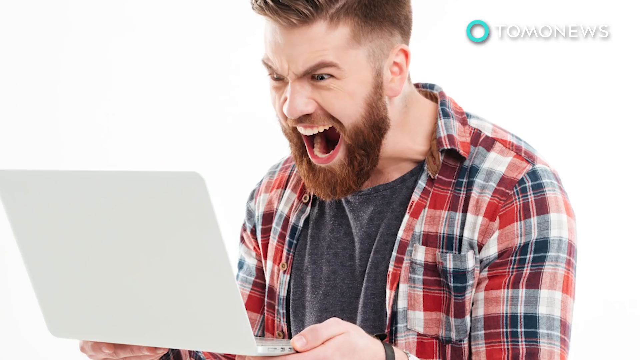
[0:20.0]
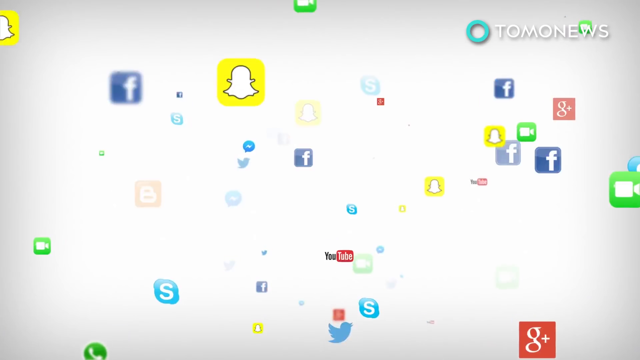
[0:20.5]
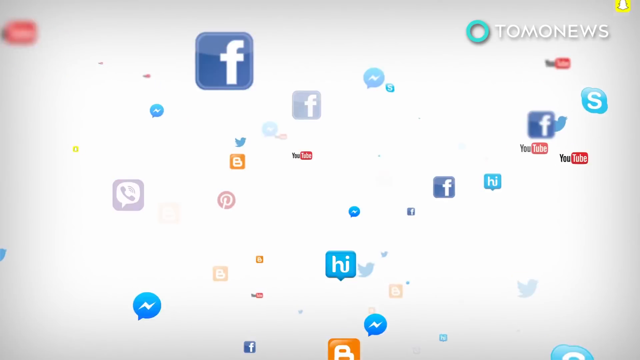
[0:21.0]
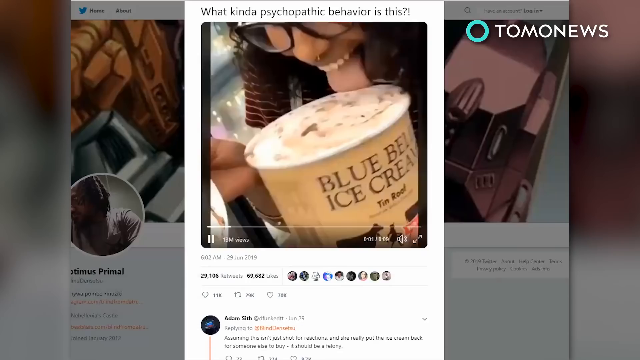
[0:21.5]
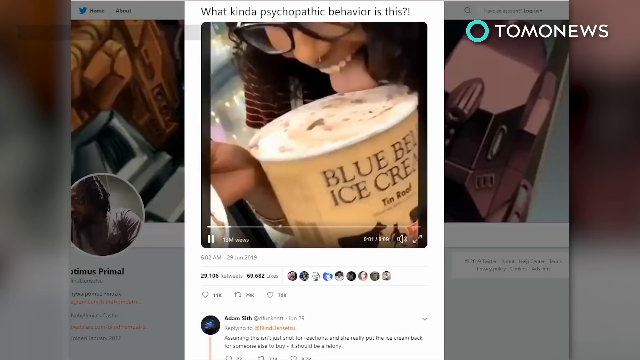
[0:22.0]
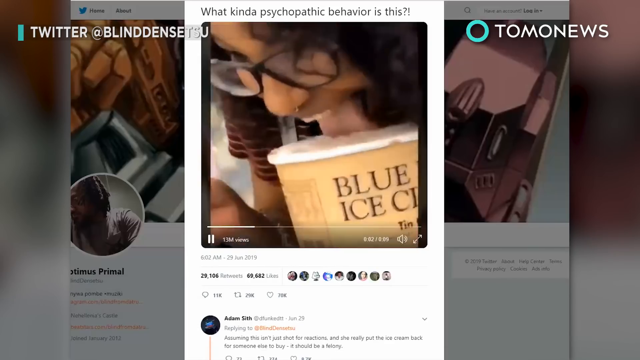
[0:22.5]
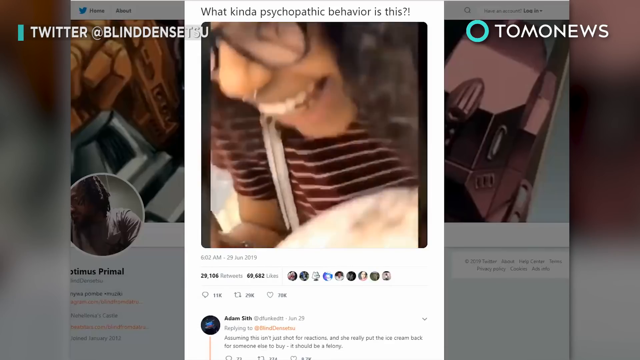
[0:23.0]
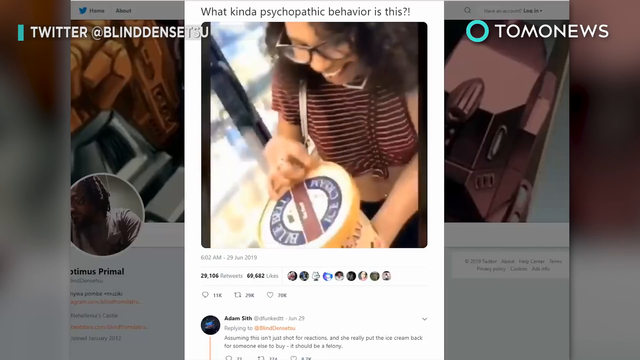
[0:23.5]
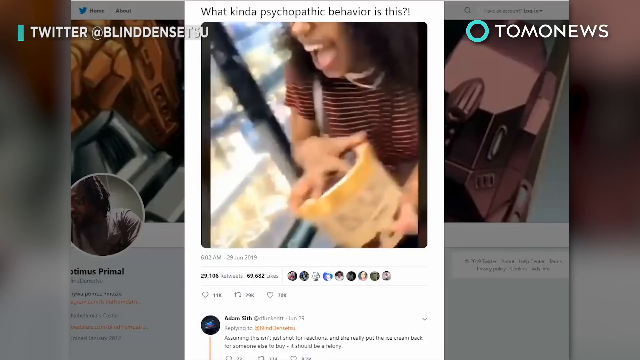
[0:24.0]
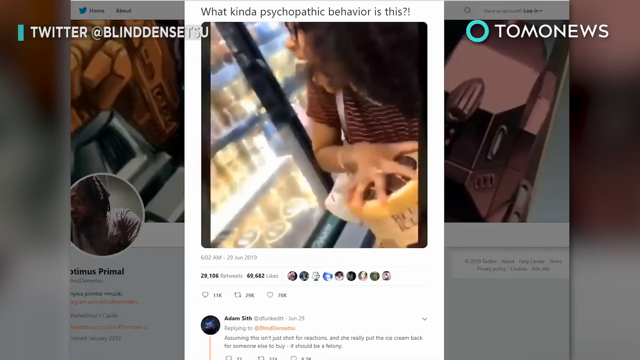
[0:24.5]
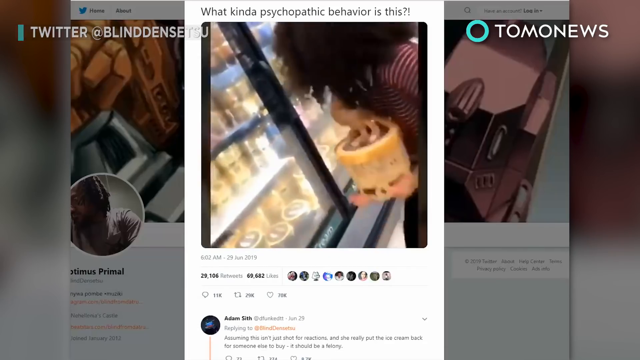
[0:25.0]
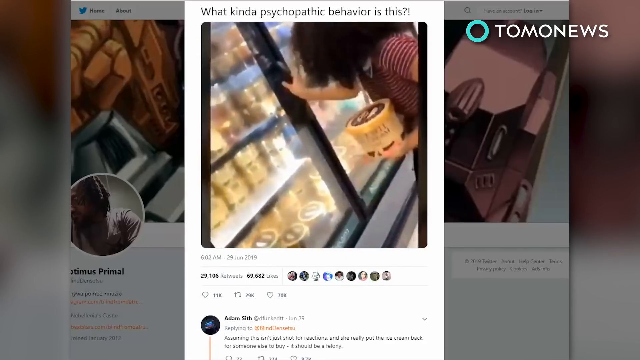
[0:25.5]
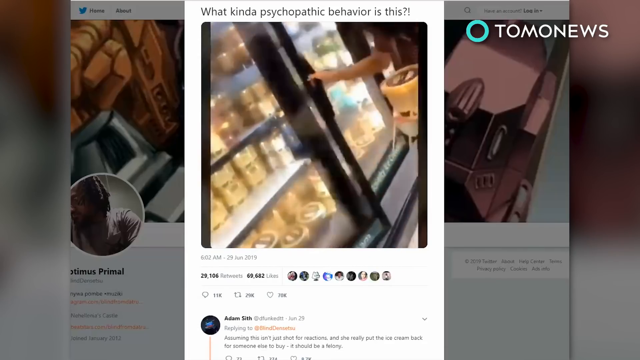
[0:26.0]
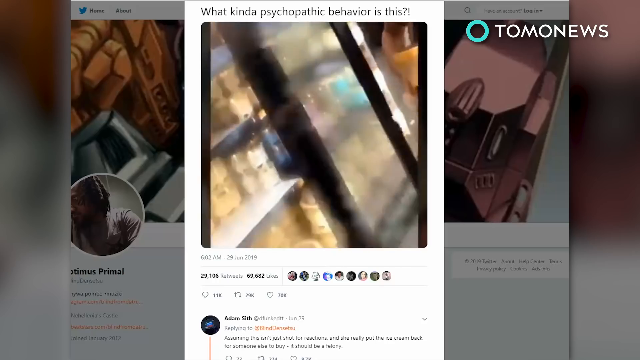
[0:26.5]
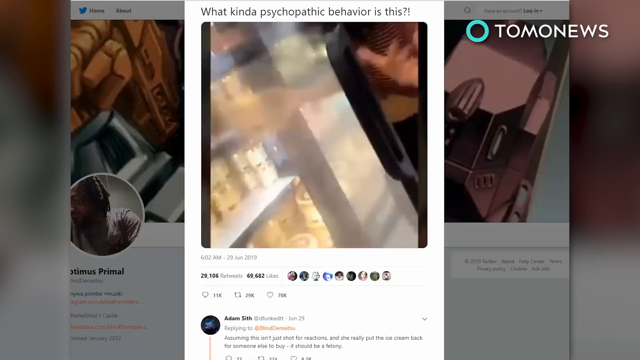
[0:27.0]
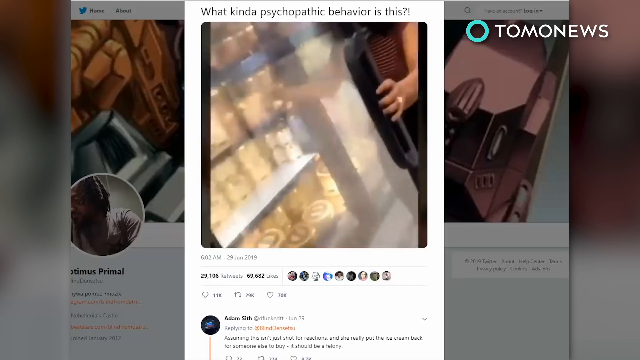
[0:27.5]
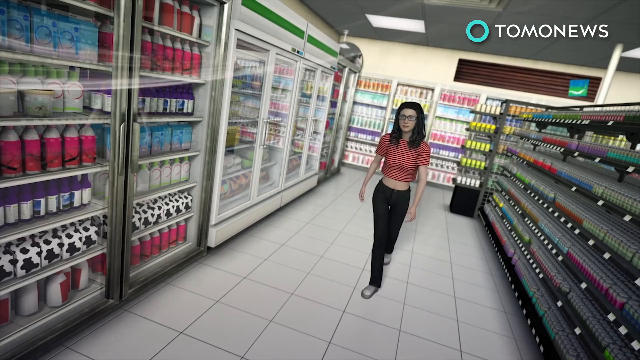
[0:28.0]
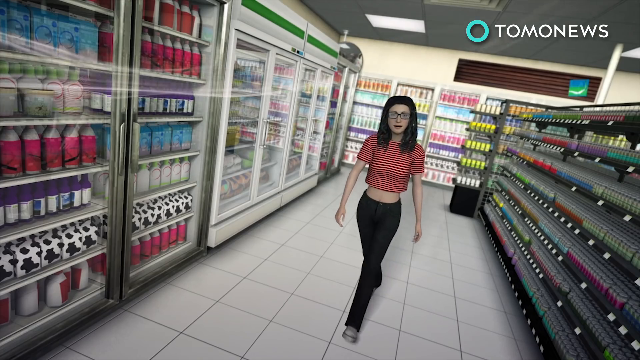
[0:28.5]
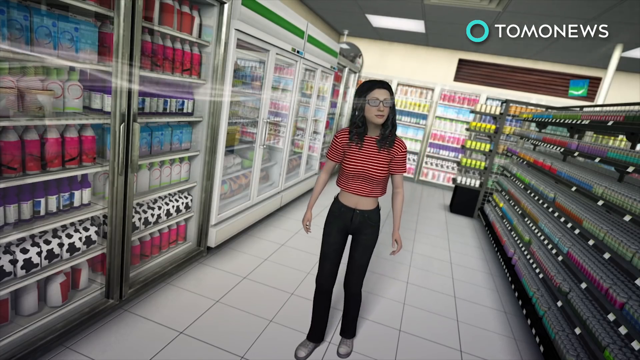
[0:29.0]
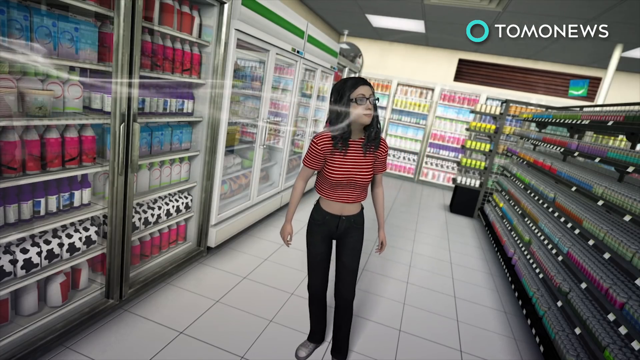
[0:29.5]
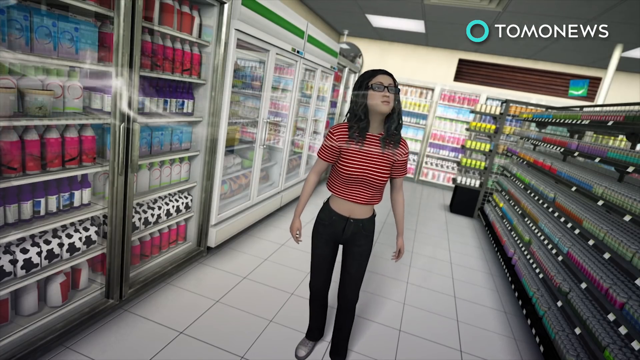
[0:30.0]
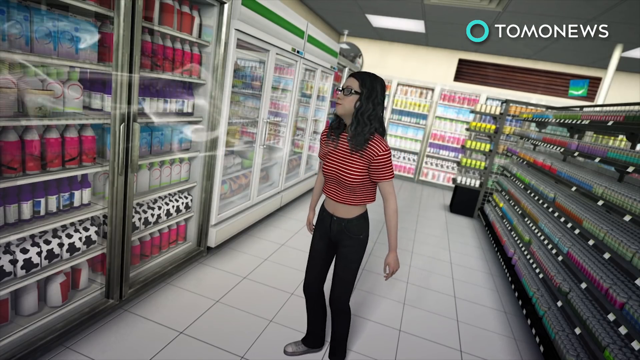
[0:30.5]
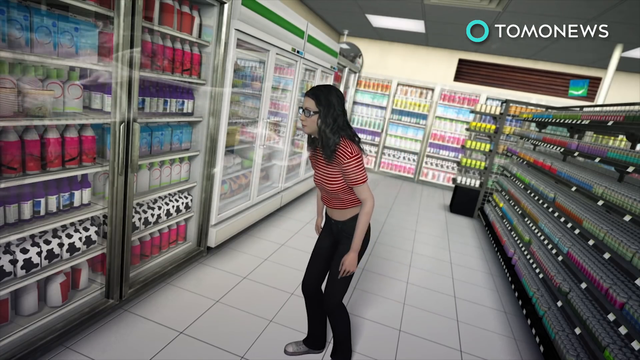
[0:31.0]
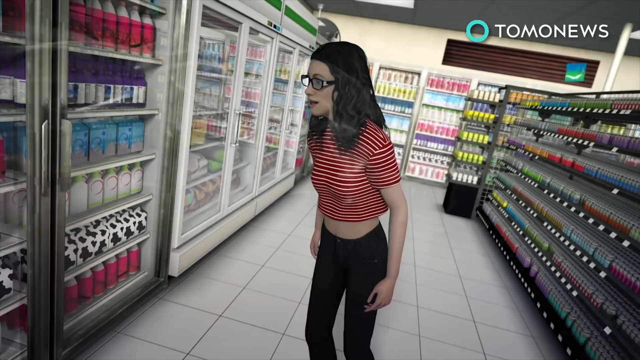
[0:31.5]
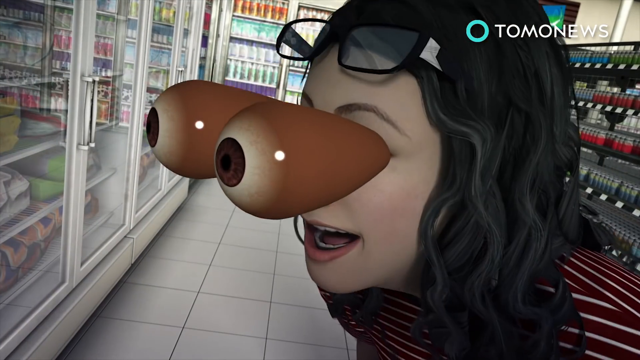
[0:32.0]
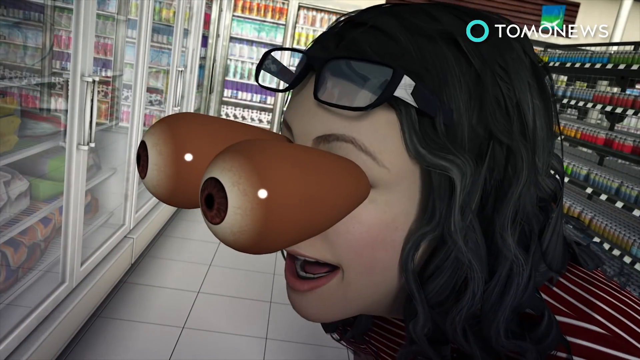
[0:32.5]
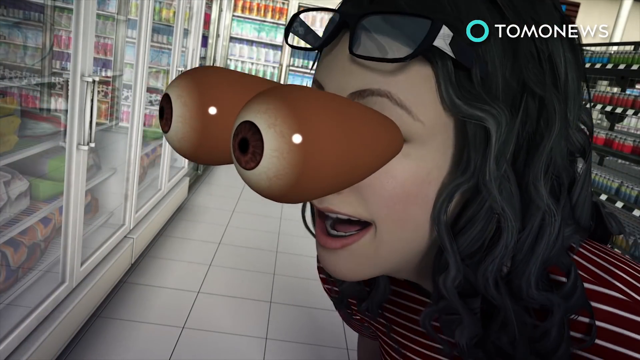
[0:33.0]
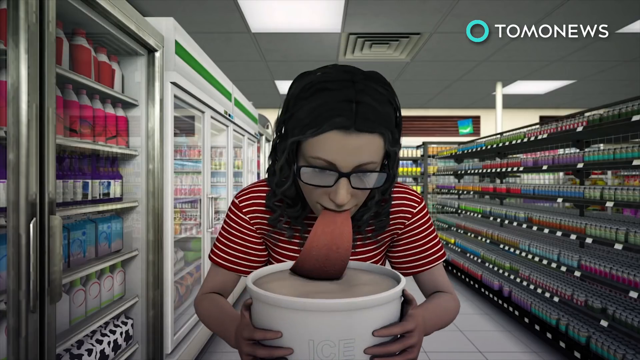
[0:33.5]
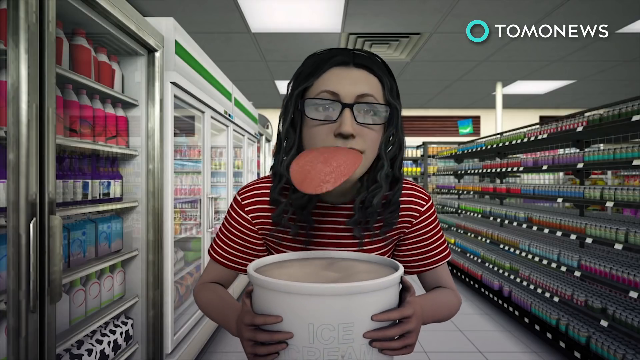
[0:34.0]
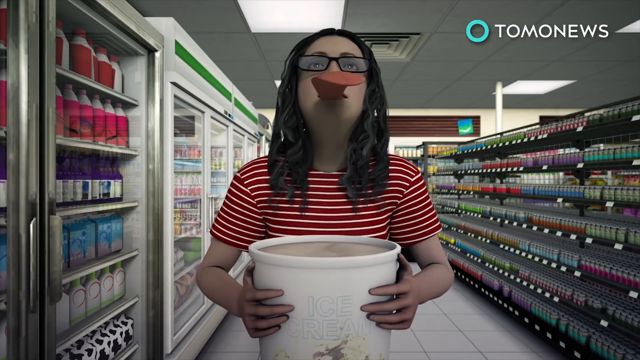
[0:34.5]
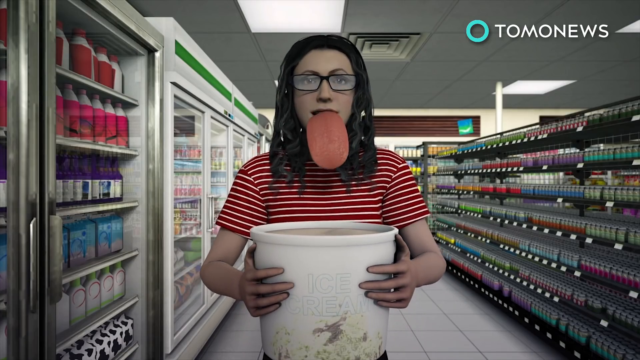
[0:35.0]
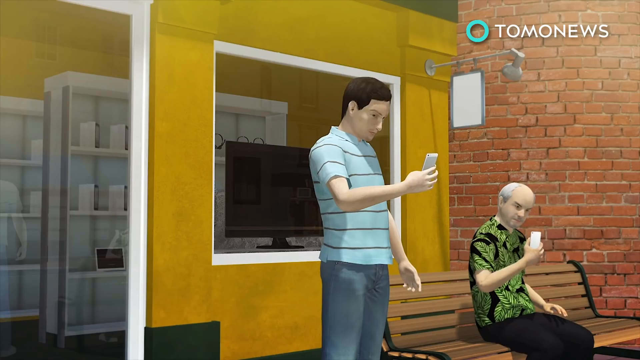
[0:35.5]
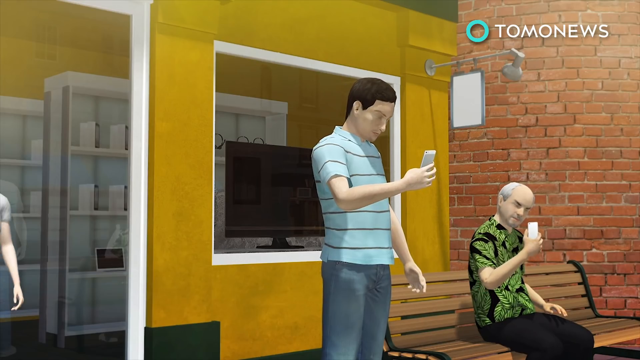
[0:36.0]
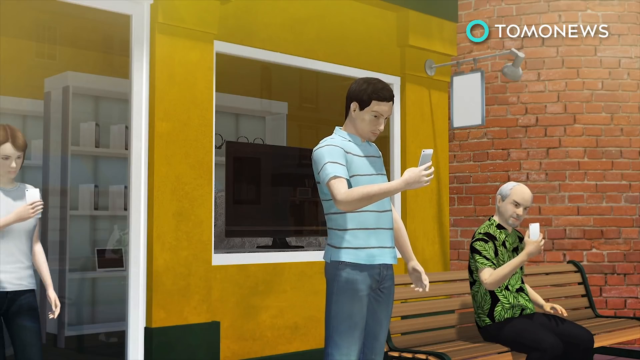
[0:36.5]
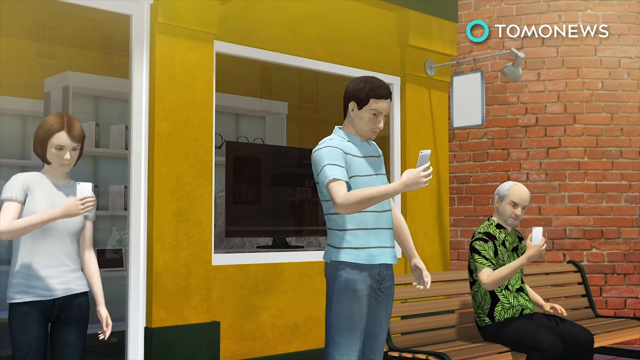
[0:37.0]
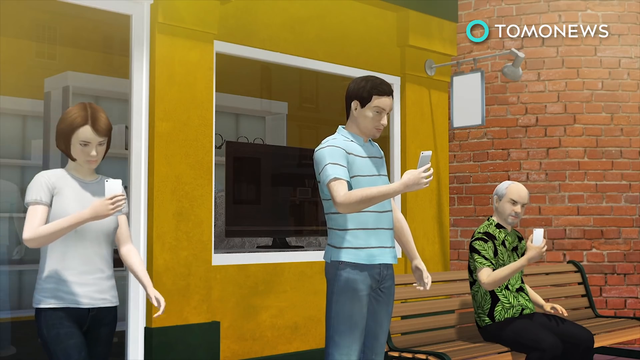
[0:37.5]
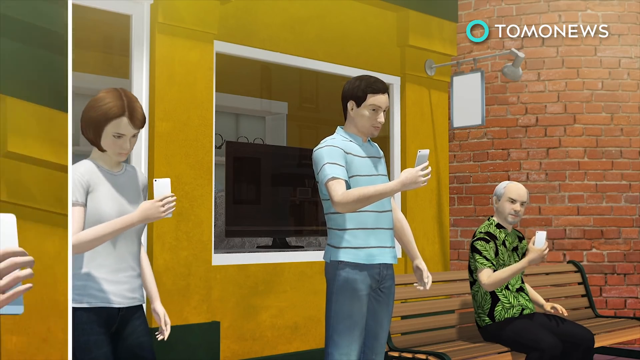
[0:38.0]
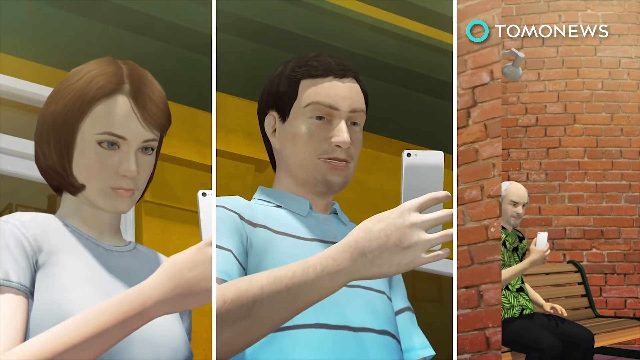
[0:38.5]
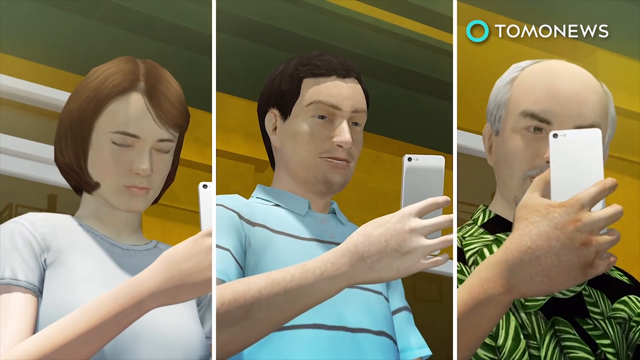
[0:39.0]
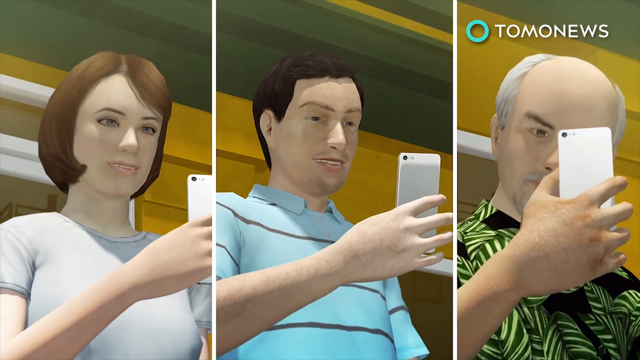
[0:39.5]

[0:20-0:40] Many social media signs pop up on the screen, including a video on Twitter of a woman licking ice cream. The screen changes to a woman entering a store; she smells the ice cream, goes straight to the fridge, takes out an ice cream and starts licking it. People are then shown watching the video on their phones and laughing, looking confused. A man in a gray top is screaming, seemingly at something funny or strange on his laptop; his face looks shocked and happy at the same time. People are seen looking at the video on their phones.